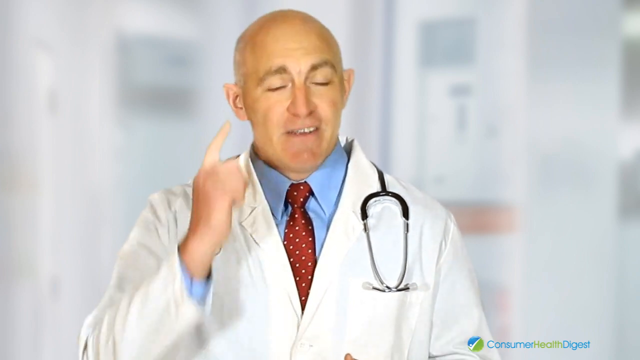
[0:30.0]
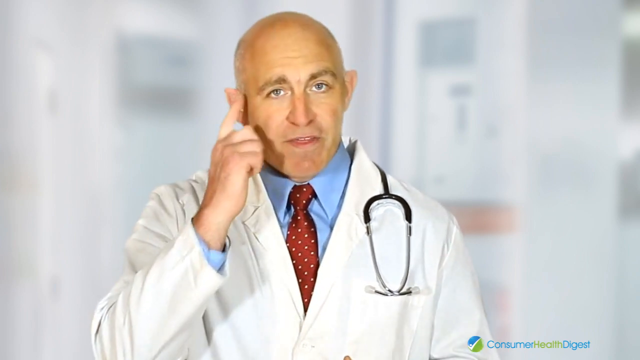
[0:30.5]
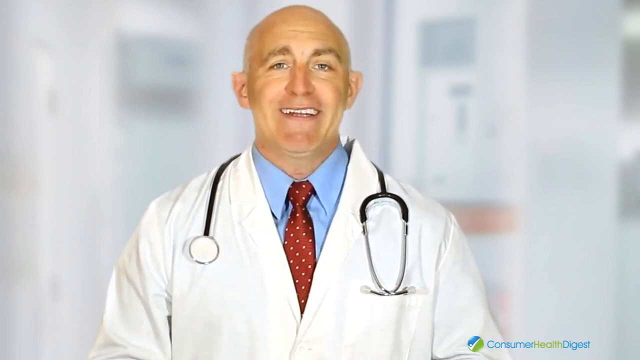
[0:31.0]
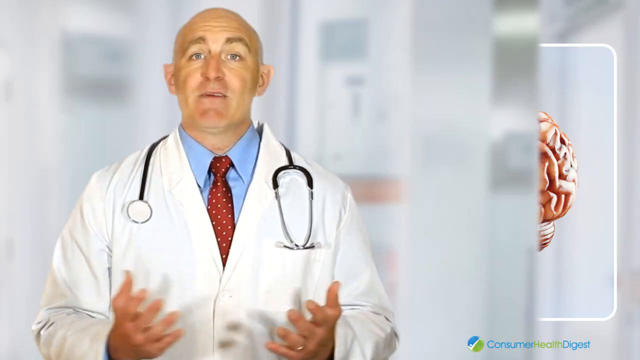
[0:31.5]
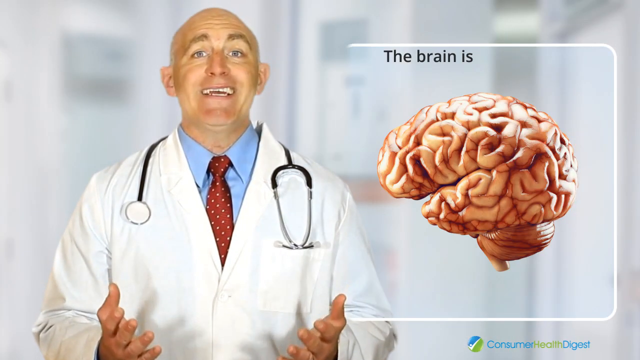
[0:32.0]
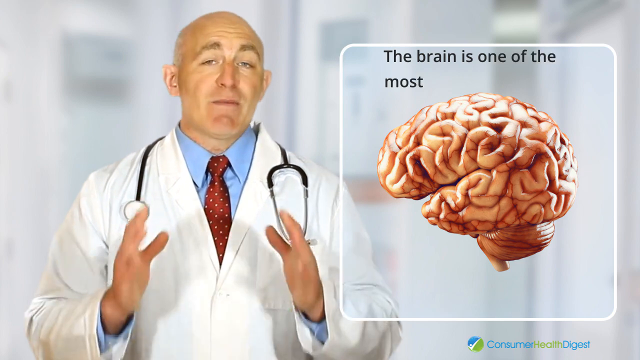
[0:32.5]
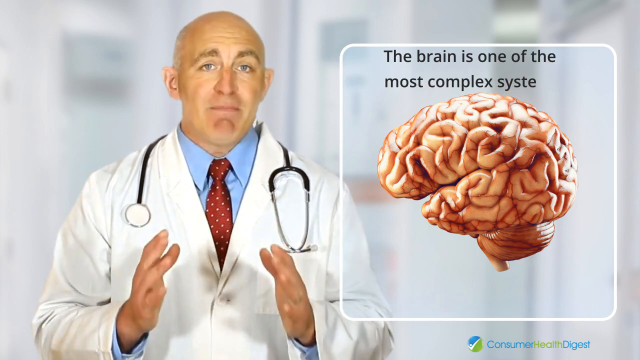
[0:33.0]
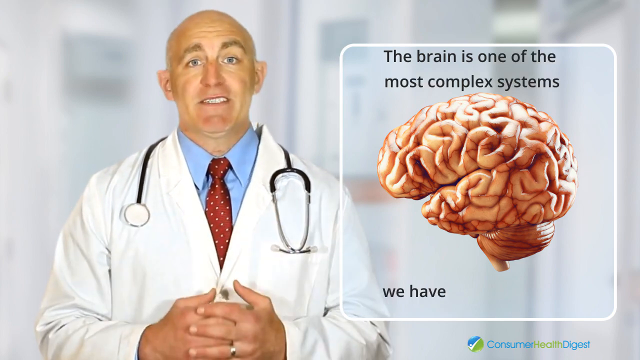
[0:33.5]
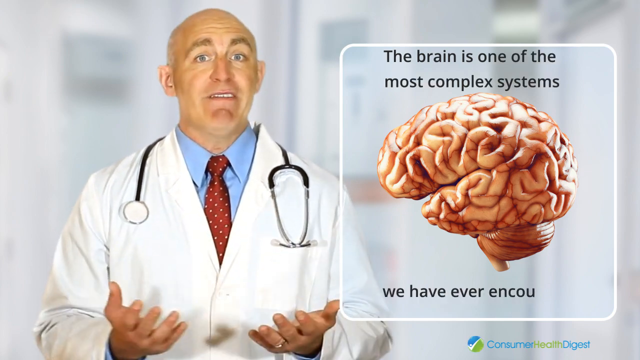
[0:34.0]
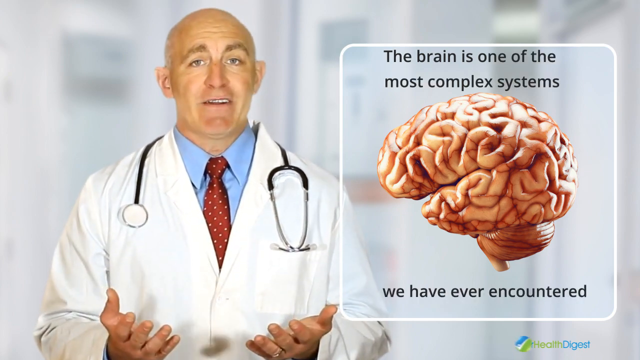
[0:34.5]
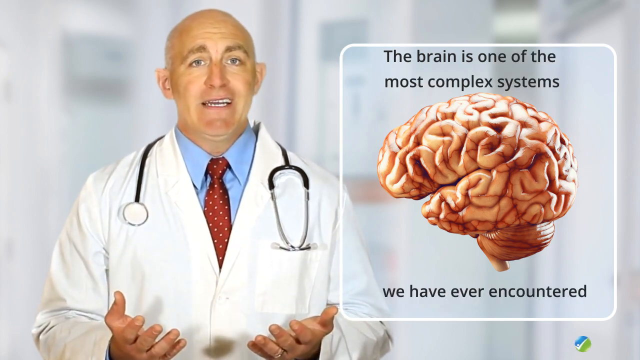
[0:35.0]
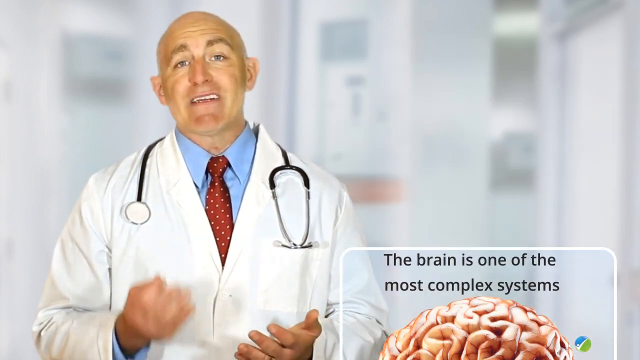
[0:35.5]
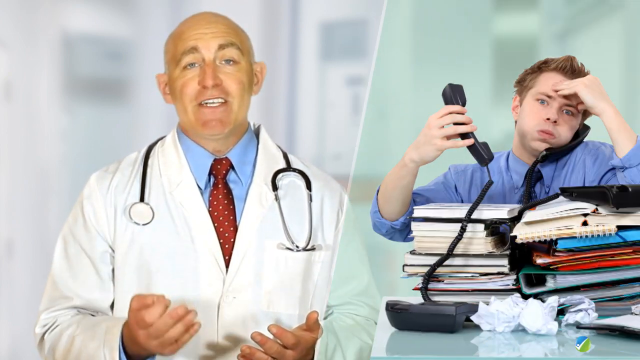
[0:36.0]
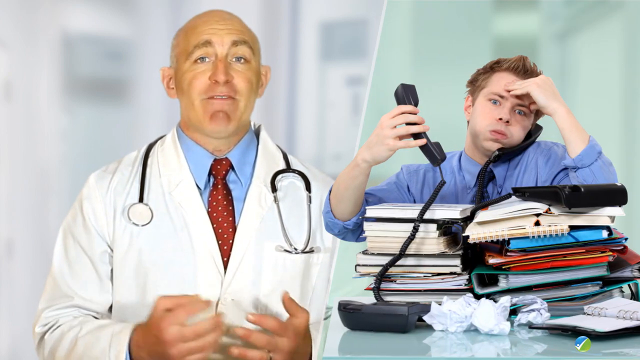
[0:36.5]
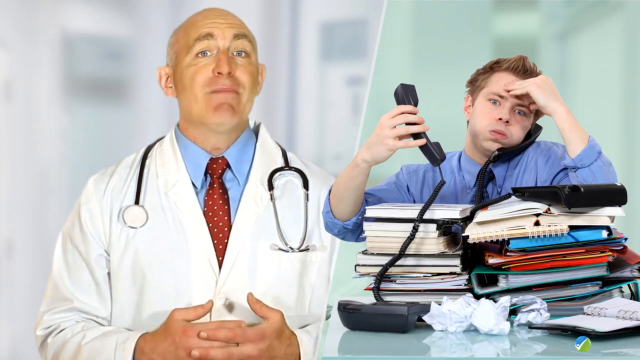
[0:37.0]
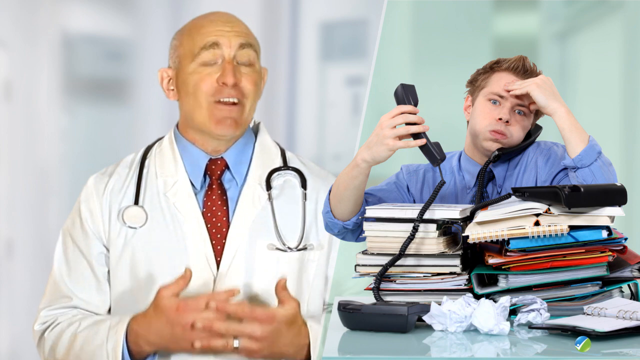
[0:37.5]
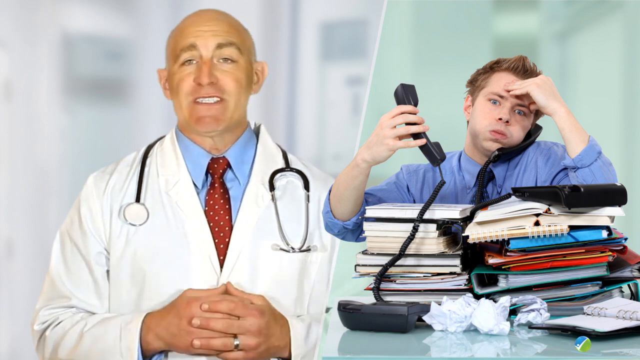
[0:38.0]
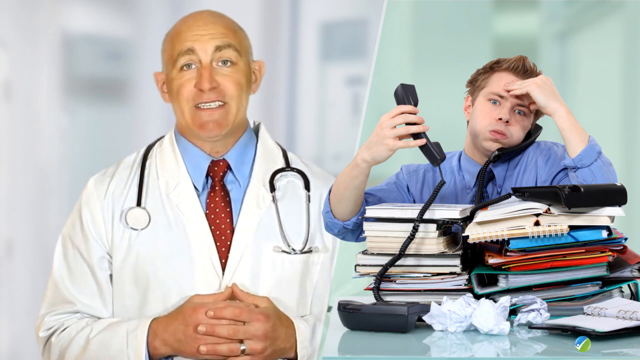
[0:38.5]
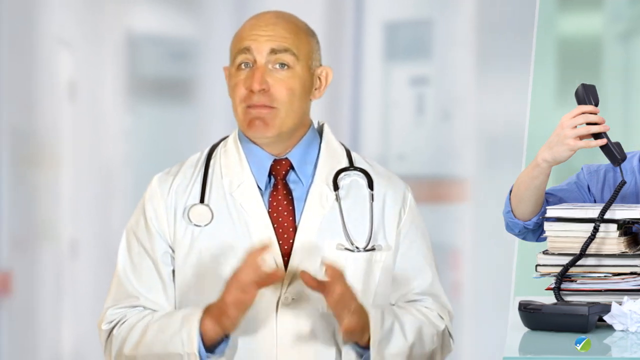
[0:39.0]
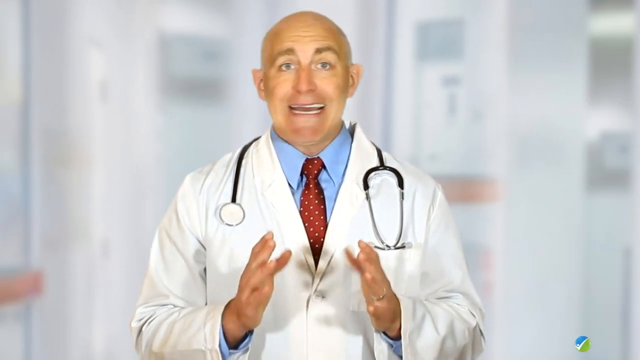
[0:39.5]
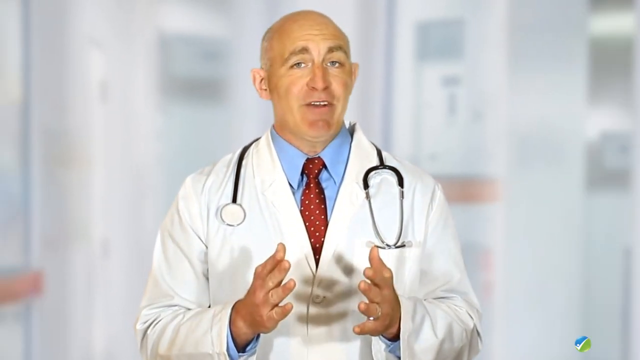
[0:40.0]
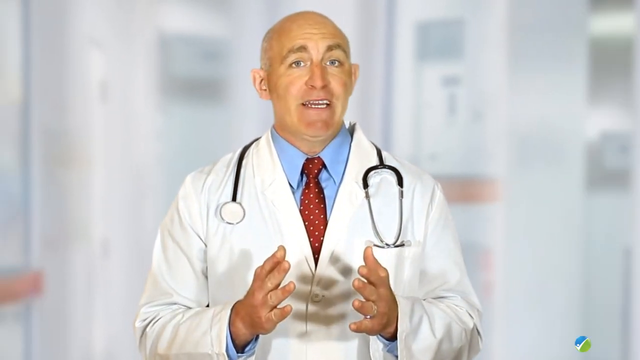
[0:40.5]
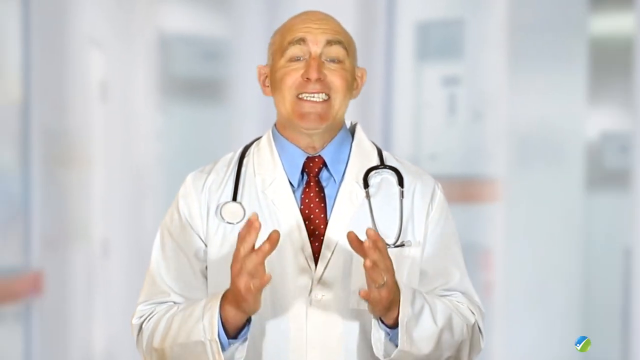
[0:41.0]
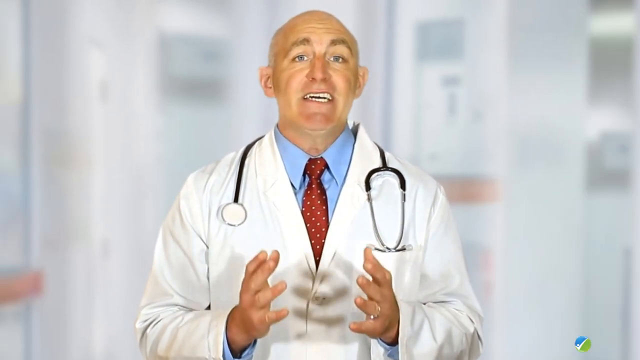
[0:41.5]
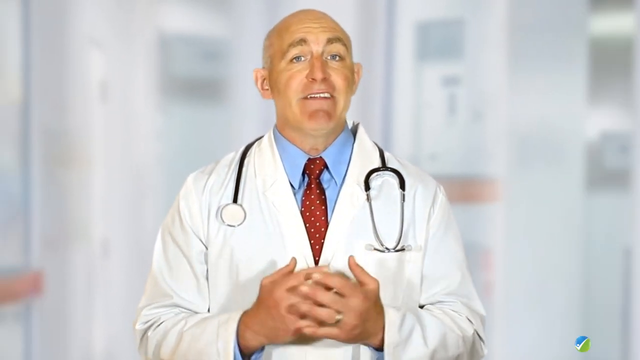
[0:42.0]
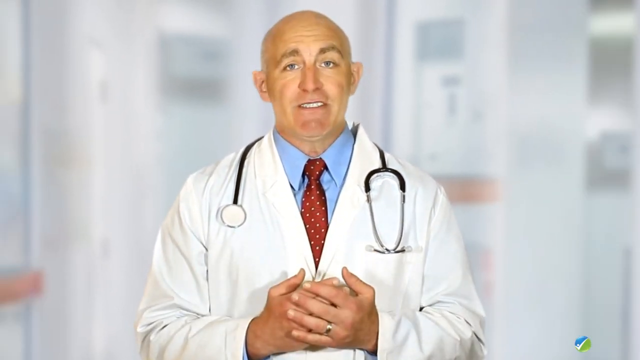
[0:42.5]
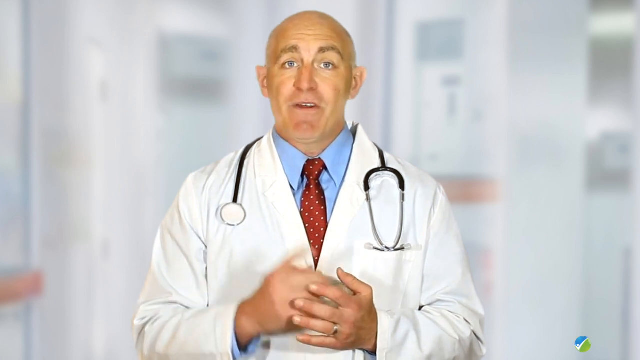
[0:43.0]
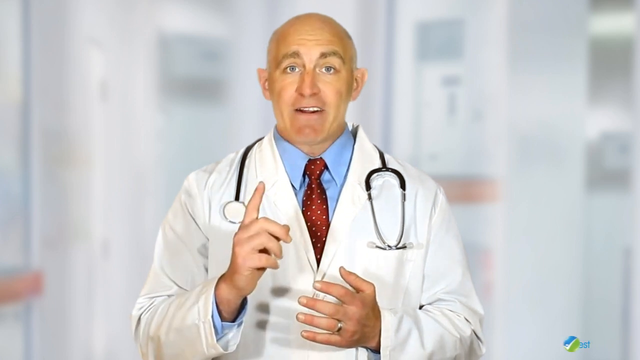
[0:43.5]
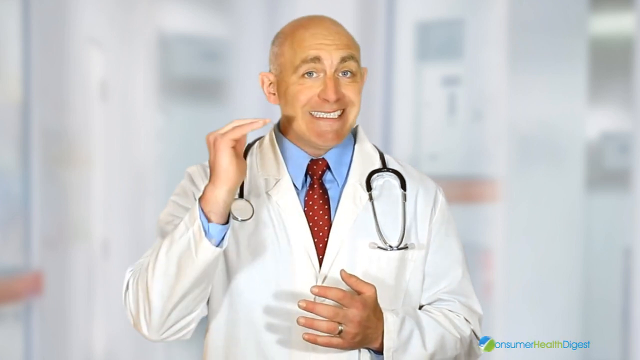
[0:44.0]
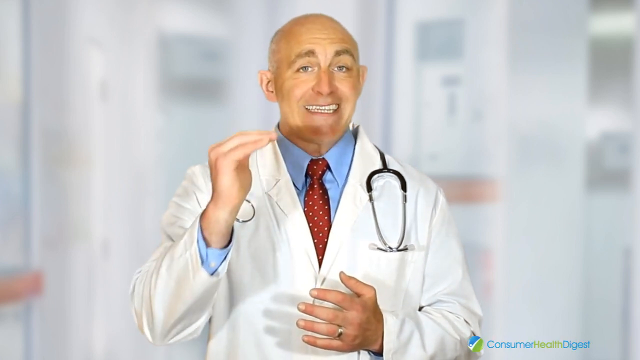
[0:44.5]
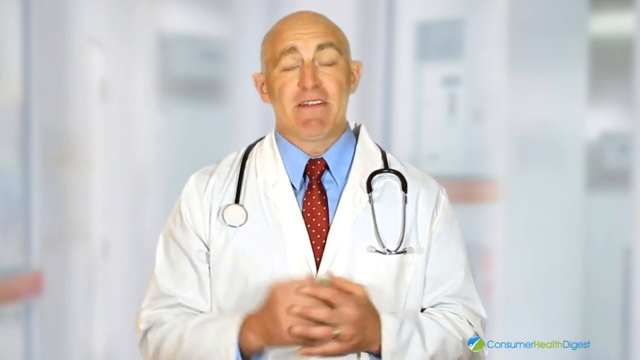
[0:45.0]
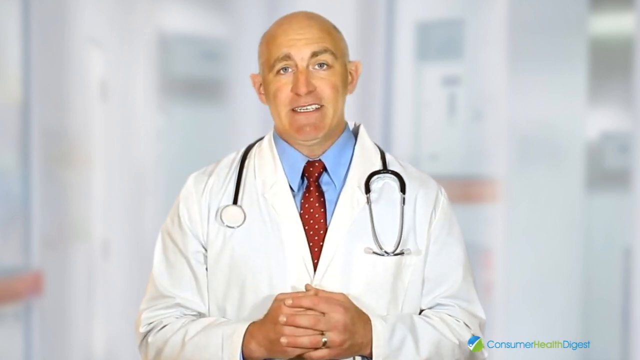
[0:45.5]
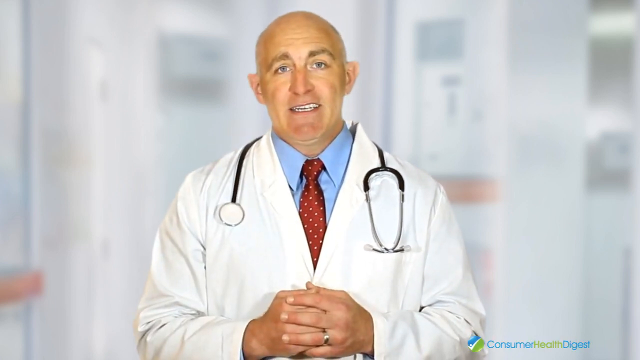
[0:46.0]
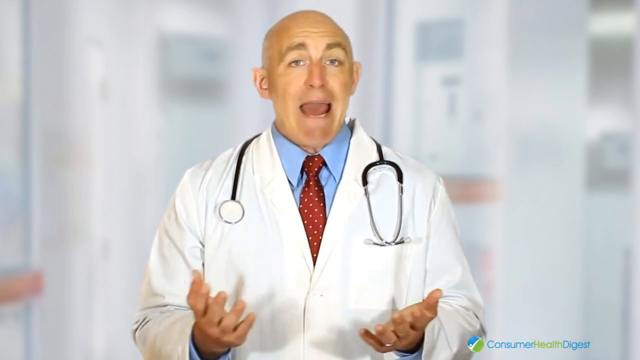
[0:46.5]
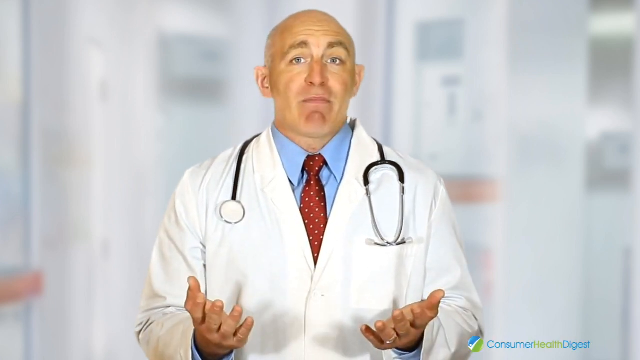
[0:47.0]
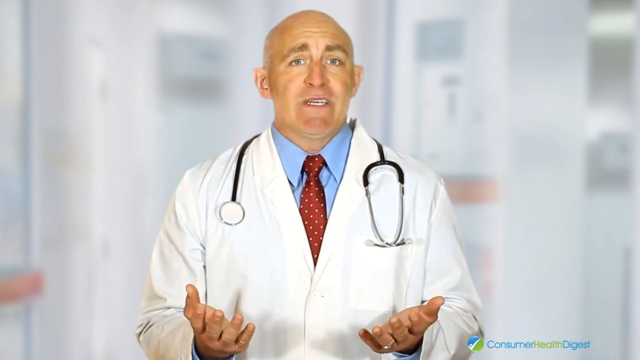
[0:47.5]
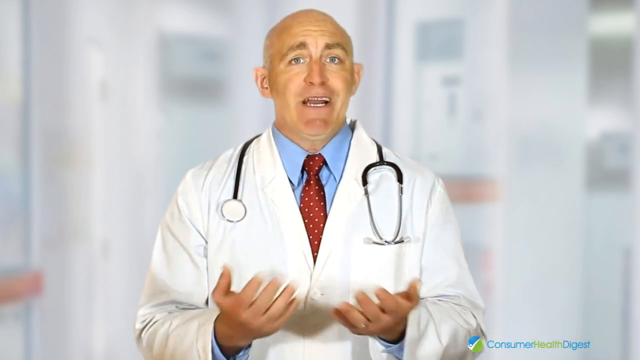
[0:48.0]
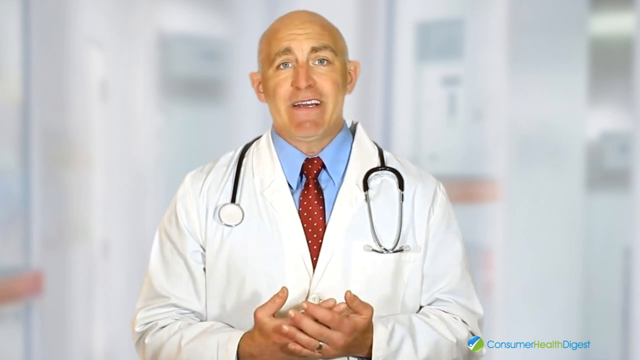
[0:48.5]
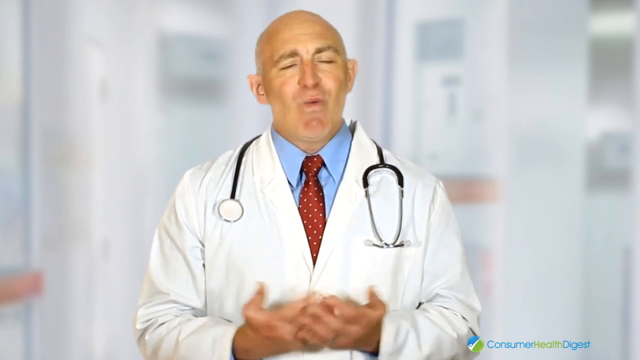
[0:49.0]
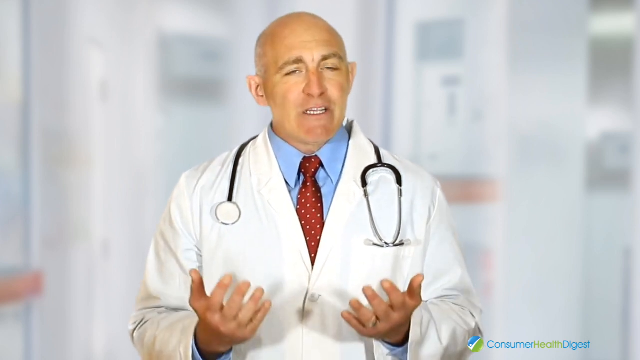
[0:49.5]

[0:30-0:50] The doctor continues presenting information to the viewer. A graphic of a brain appears to the doctor's left side. Above the brain, black text reads "the brain is one of the most complex systems," and underneath it says "we have ever encountered." The brain image disappears and the video cuts to a person holding a telephone with a lot of books in front of them, looking exasperated, as if they do not know what to do. The image returns to the doctor in the center, who keeps talking while moving his hands as he makes his points. The doctor, an older bald man, is still wearing a lab coat with a stethoscope, a blue shirt, and a red tie with little white dots.